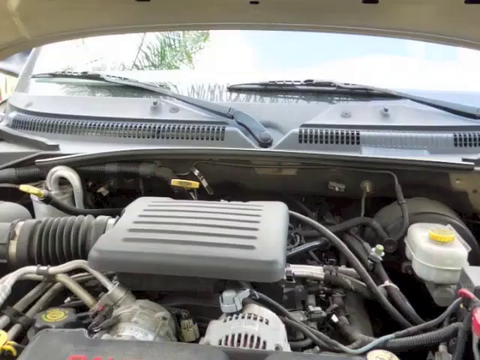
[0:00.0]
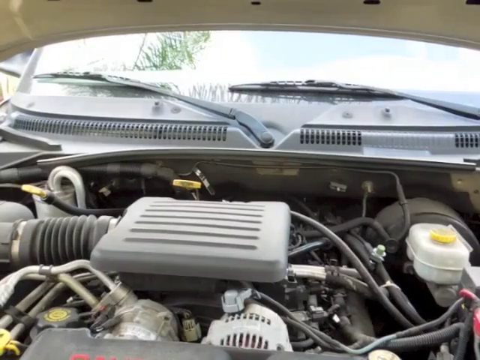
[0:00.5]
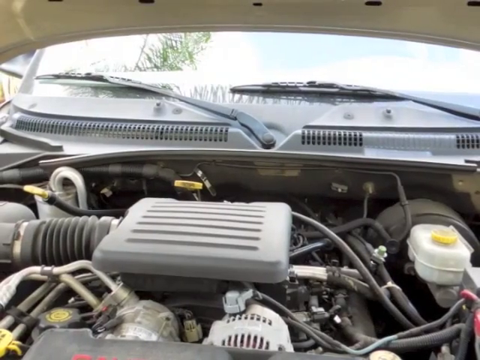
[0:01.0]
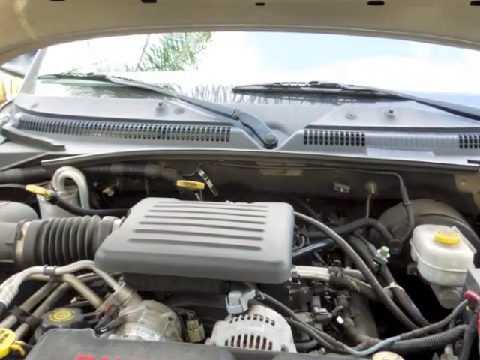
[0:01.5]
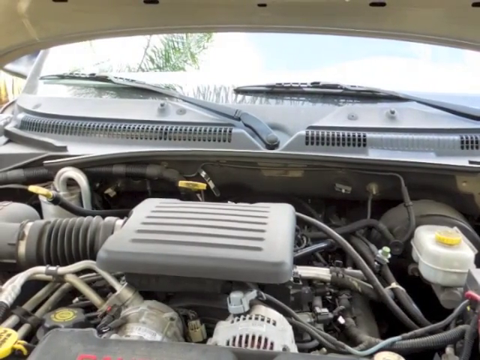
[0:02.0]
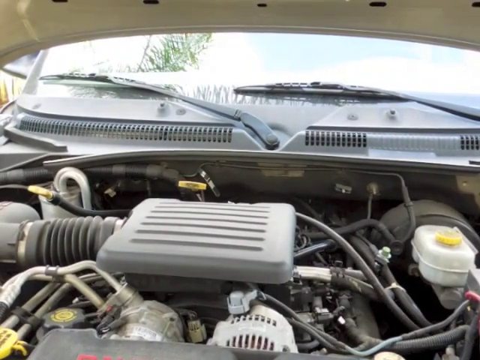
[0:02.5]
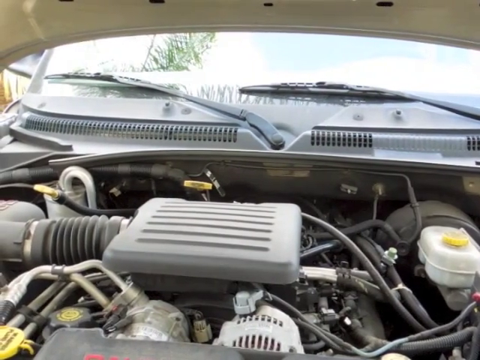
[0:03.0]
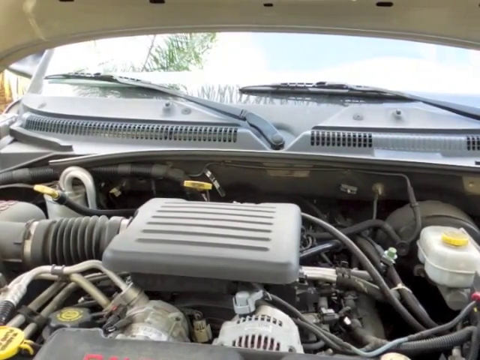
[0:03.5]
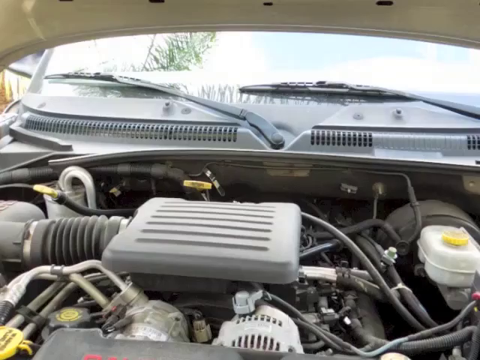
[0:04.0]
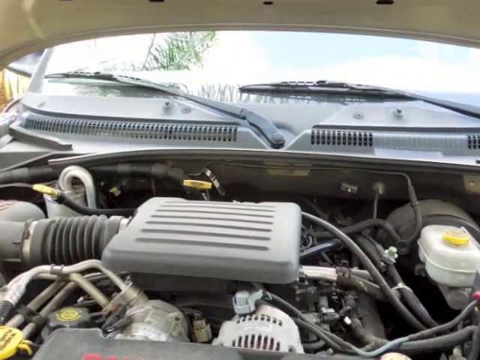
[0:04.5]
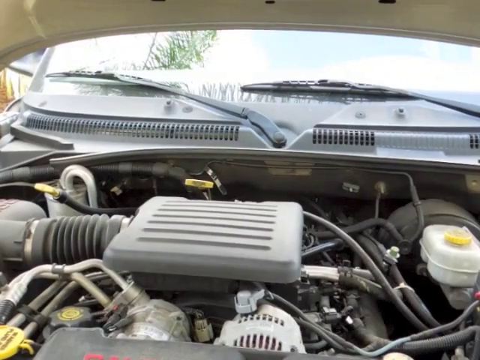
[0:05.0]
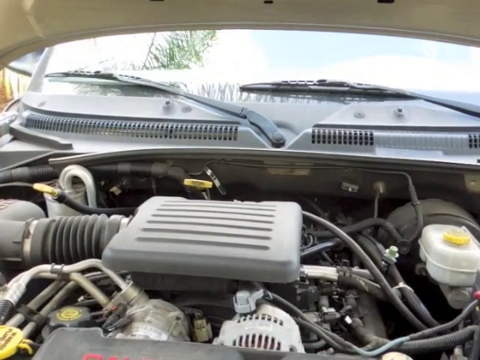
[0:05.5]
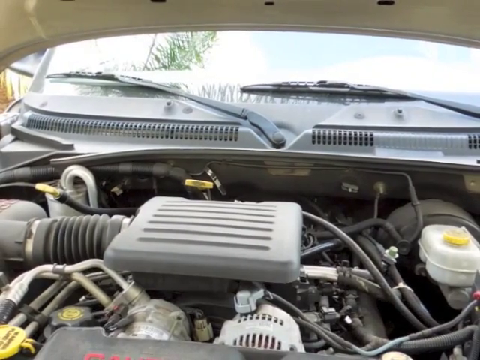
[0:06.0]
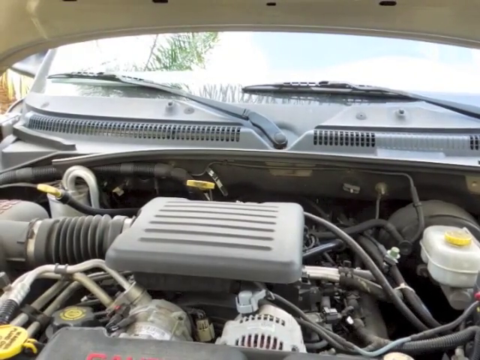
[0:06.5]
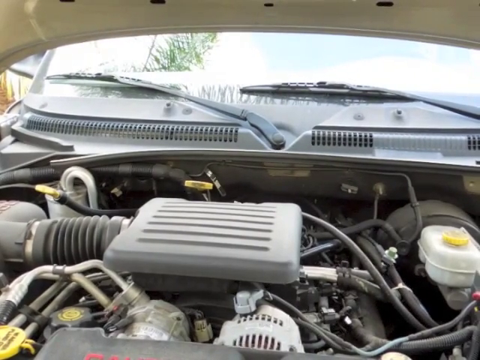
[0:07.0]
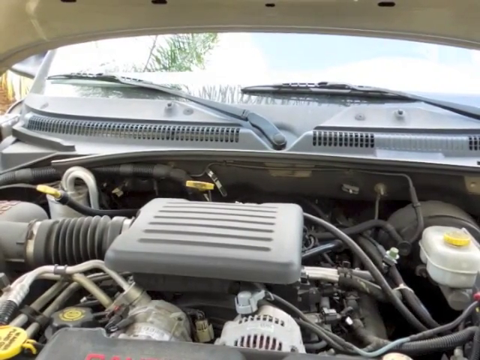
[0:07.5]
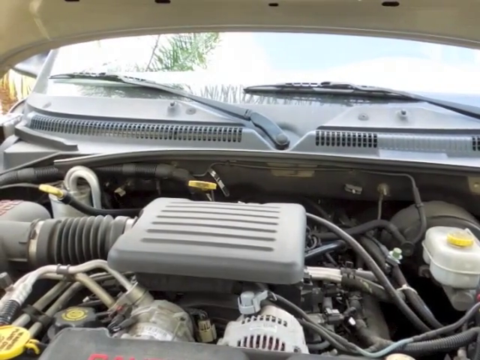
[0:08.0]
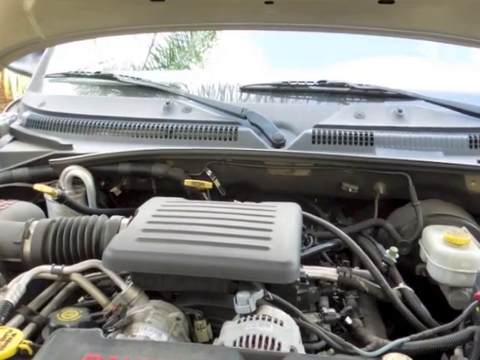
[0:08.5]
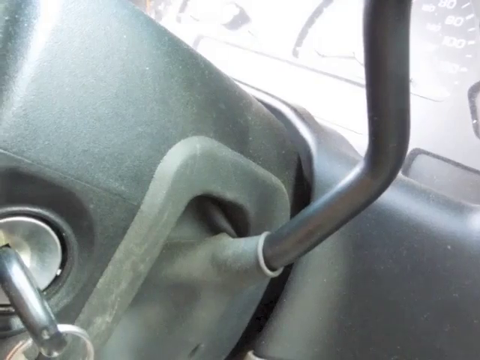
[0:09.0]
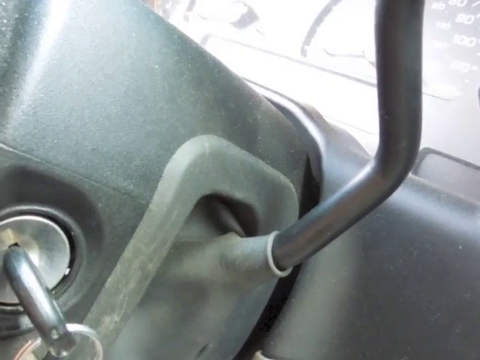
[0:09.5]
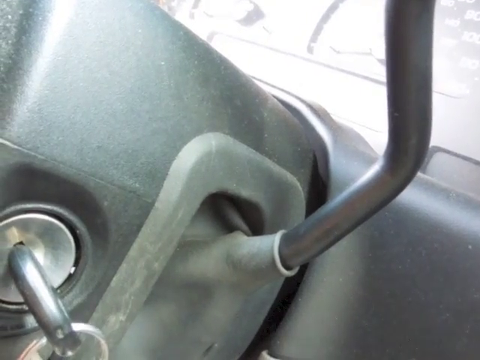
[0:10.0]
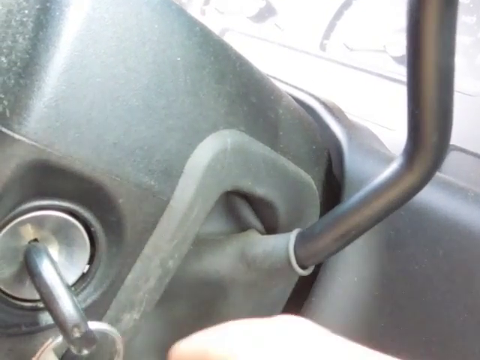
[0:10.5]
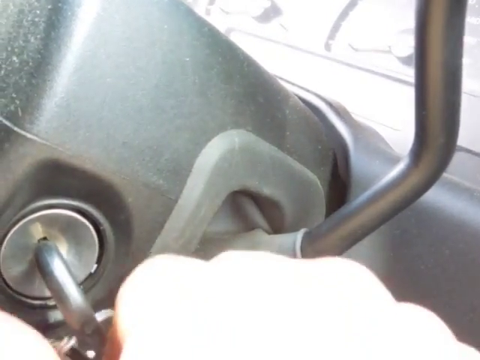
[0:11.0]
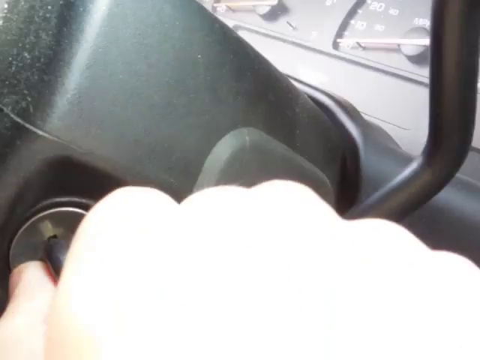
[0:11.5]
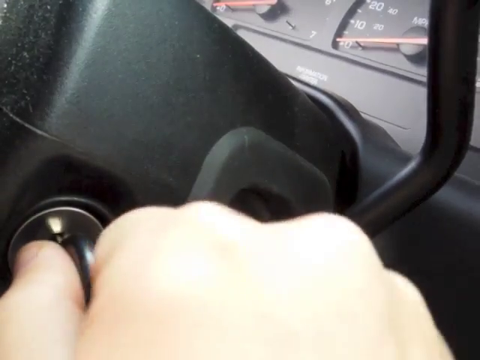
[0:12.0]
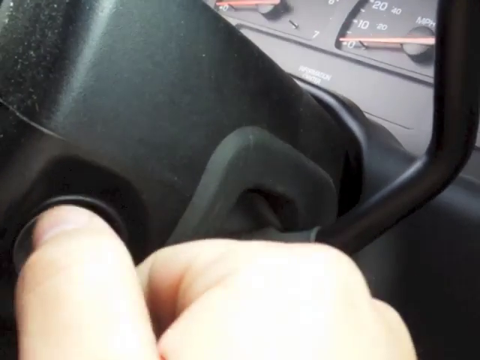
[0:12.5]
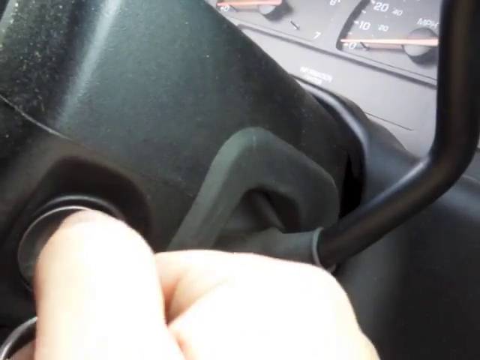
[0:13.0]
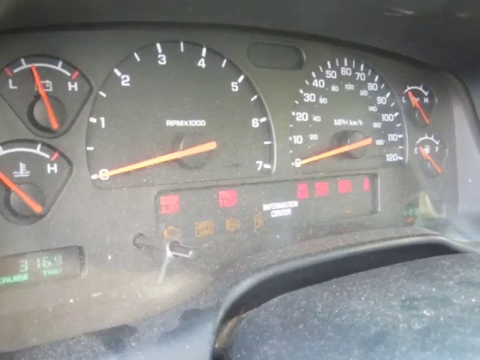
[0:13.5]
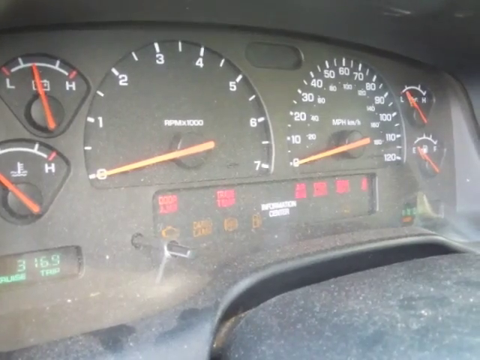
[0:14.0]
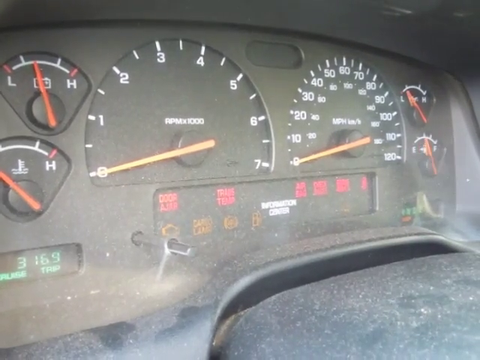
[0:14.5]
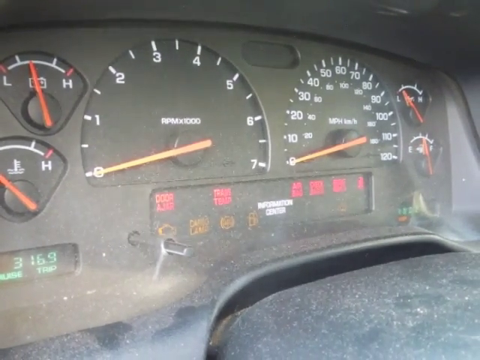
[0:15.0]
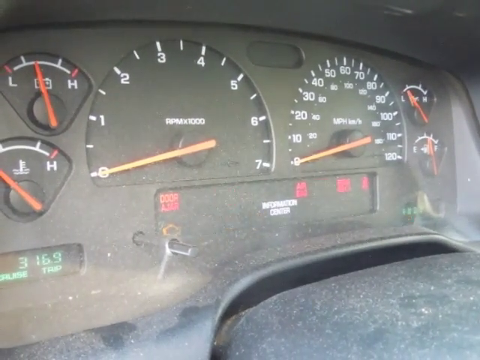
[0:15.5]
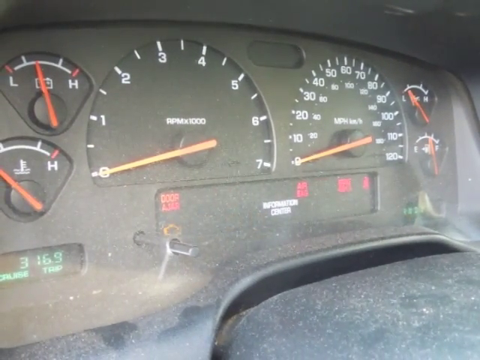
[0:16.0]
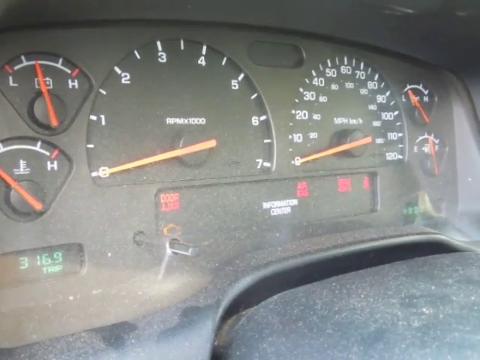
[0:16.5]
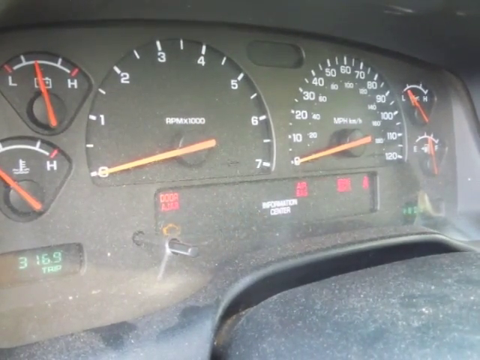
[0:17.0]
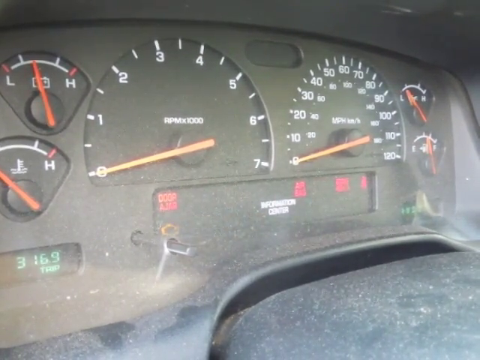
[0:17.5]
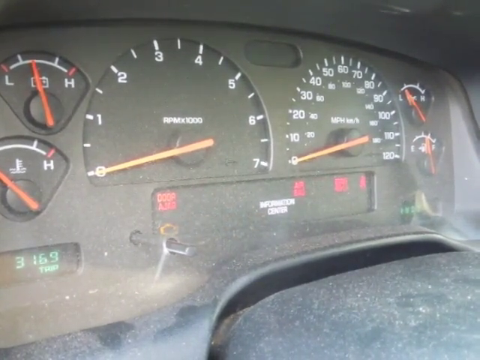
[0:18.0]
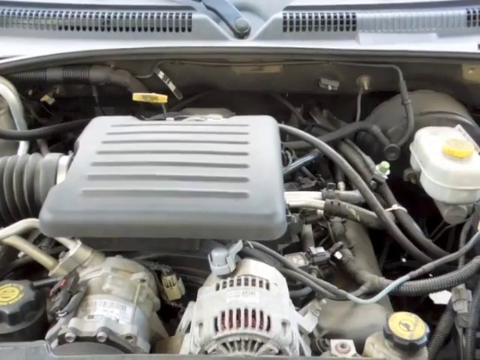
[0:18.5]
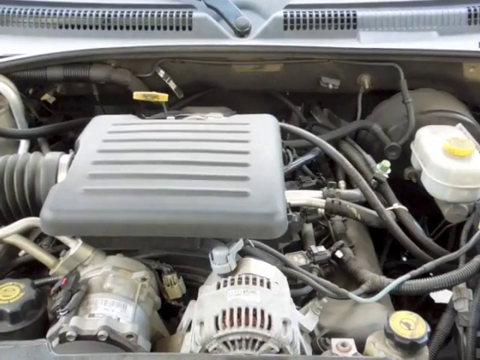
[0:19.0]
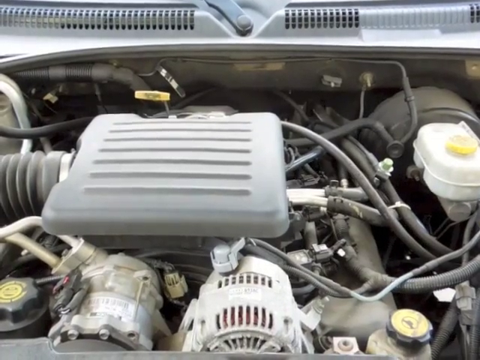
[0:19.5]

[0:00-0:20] The video opens on the engine compartment of a vehicle, viewed from the front of the vehicle looking down inside toward the windshield, where the wipers are visible. The curved edge of the open hood is at the top of the screen. On the right is a white plastic container, a reservoir for solution, with a yellow cap. On the left side of the compartment is a little yellow handle that is part of an oil dipstick. In the center is a plastic rectangular cover with horizontal lines, covering the air cleaner, and to the left of this cover an accordion-looking section connects to the air cleaner. Toward the bottom front of the frame is the alternator, along with hoses to pumps, various attachment points, rubber hoses, metal hoses, connectors and fittings. The view then changes to inside the vehicle in the driver's seat area, looking over the right side of the steering column. A key is in the ignition, and a shift lever toward the right center of the screen goes down into a rubber boot on the plastic housing of the steering column. A hand turns the ignition key clockwise. There is an immediate cut to the instrument cluster: an analog RPM gauge on the left and a large analog speed gauge on the right, low and high battery charge on the upper left, smaller coolant temperature gauges on the lower left, an additional temperature gauge on the upper right, and the gas level on the lower right. In the center, just above the steering column, is an "Information Center" logo with white text.